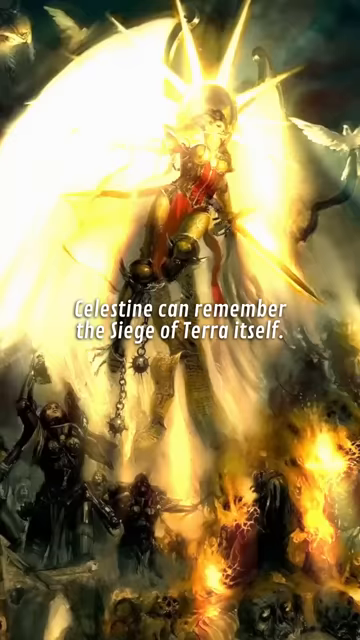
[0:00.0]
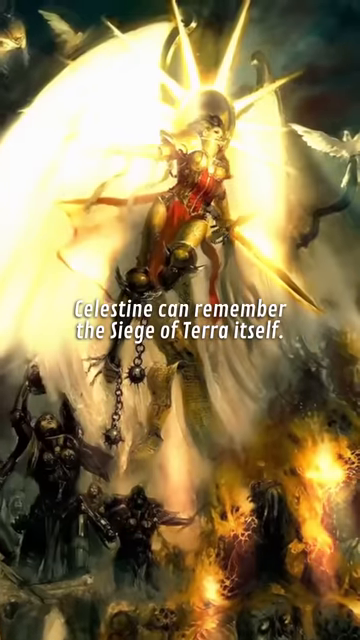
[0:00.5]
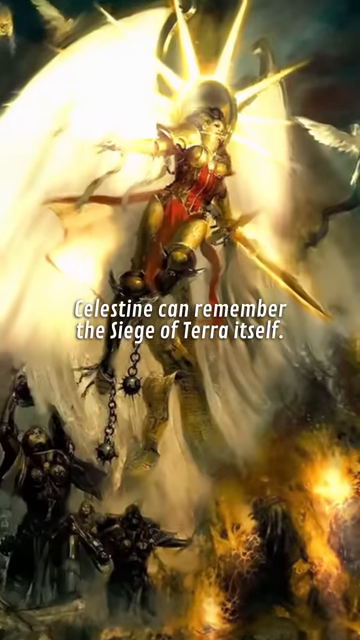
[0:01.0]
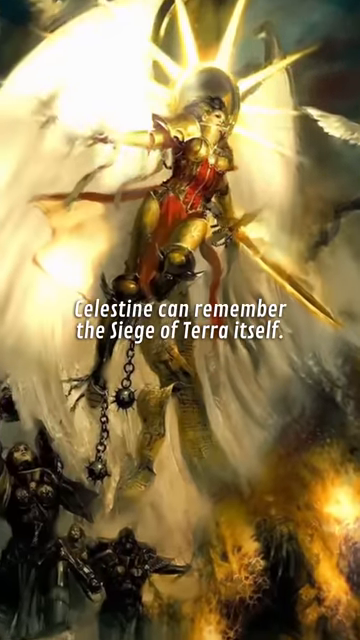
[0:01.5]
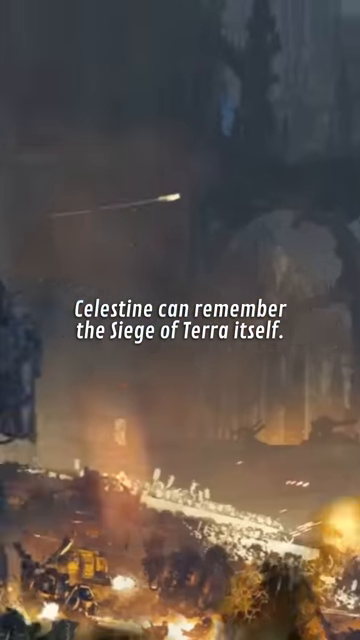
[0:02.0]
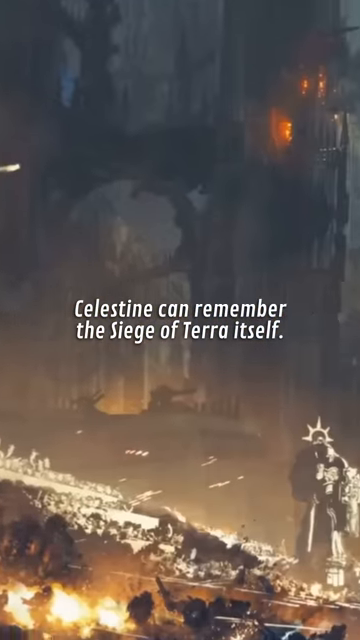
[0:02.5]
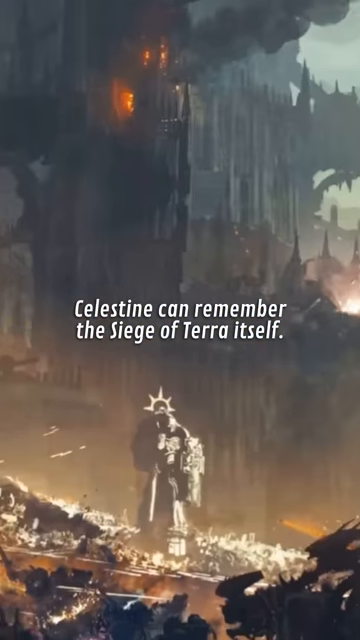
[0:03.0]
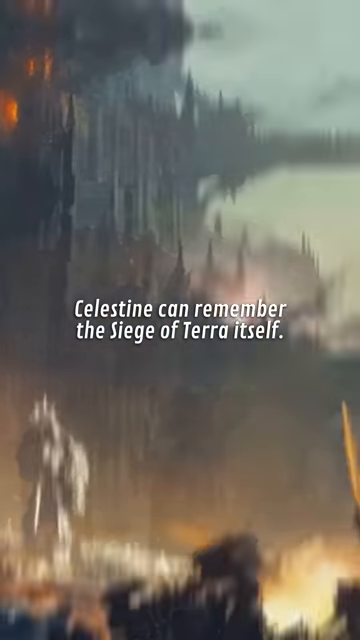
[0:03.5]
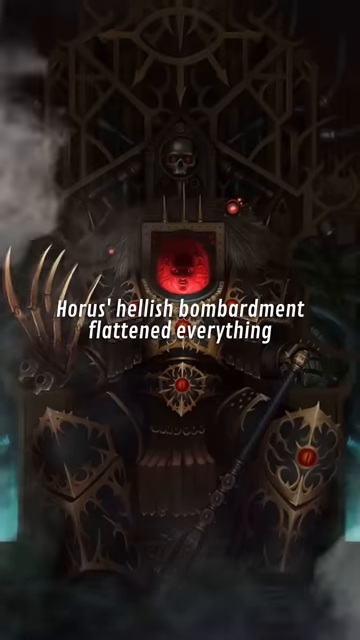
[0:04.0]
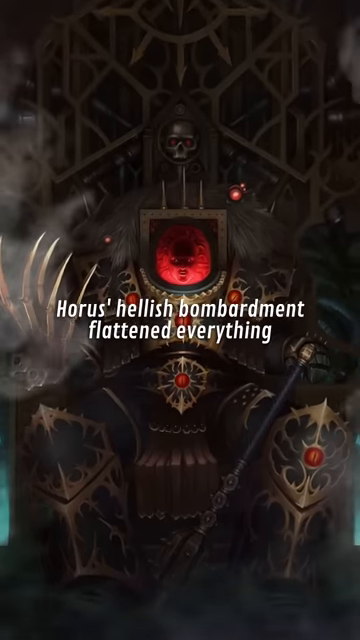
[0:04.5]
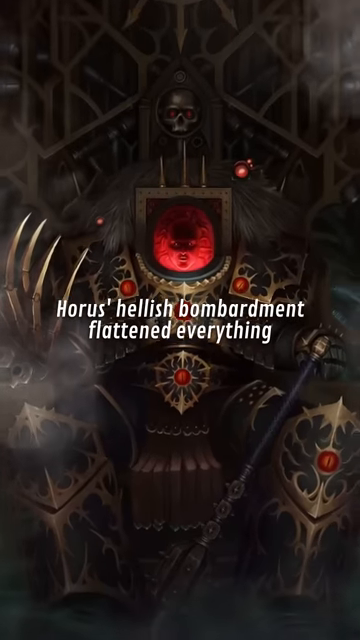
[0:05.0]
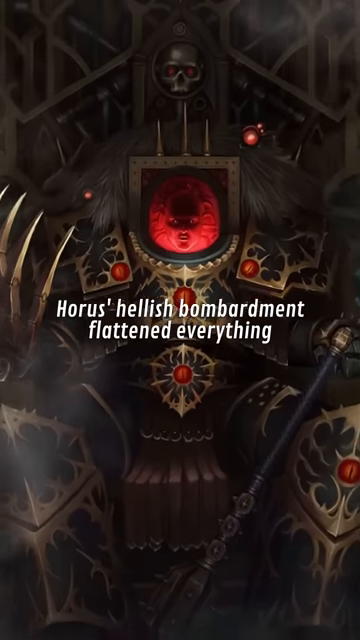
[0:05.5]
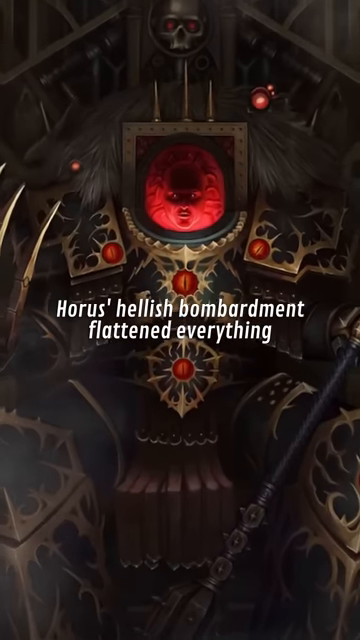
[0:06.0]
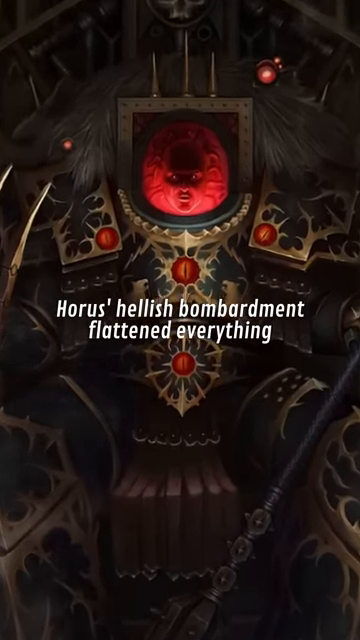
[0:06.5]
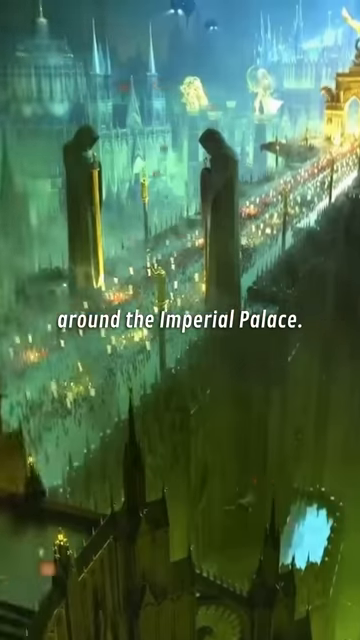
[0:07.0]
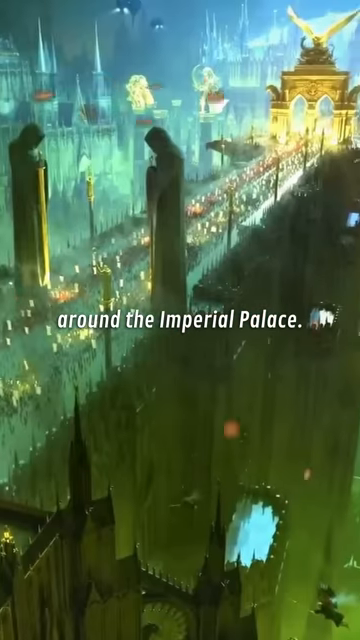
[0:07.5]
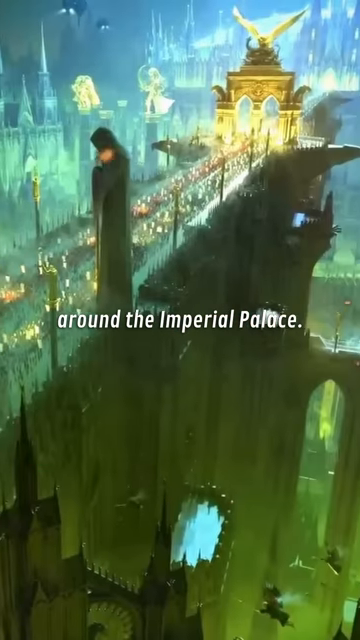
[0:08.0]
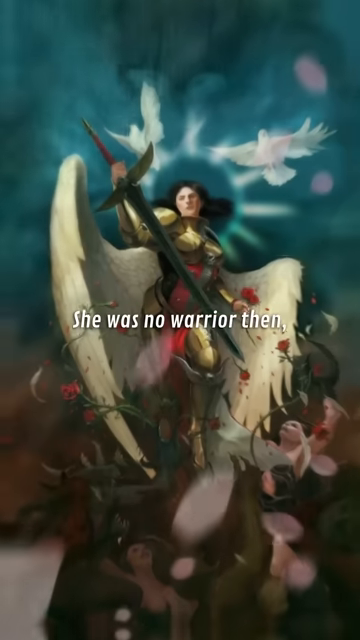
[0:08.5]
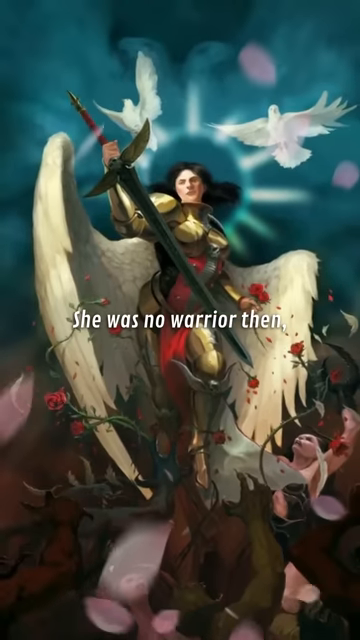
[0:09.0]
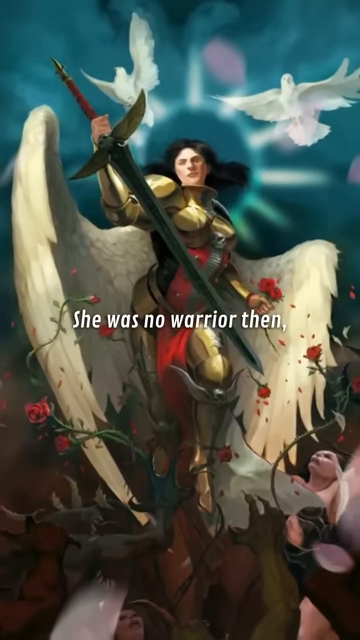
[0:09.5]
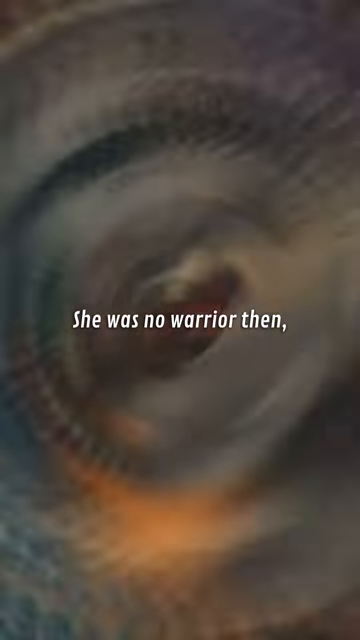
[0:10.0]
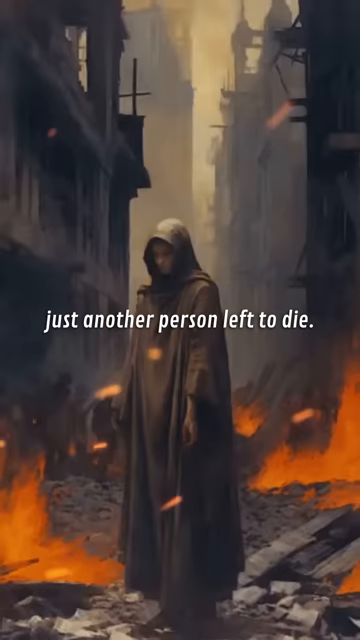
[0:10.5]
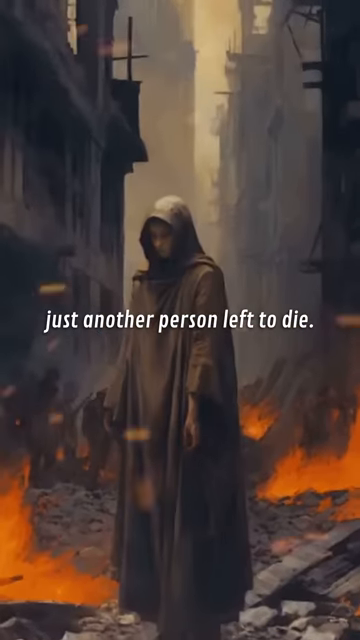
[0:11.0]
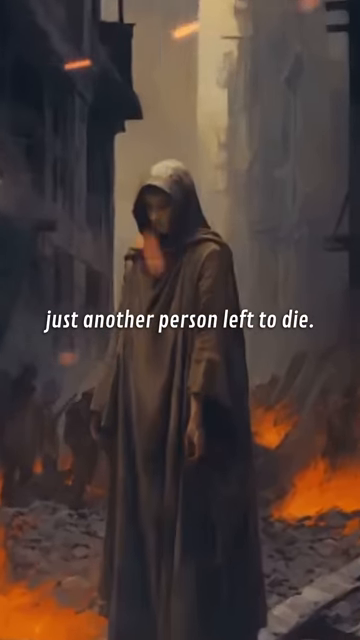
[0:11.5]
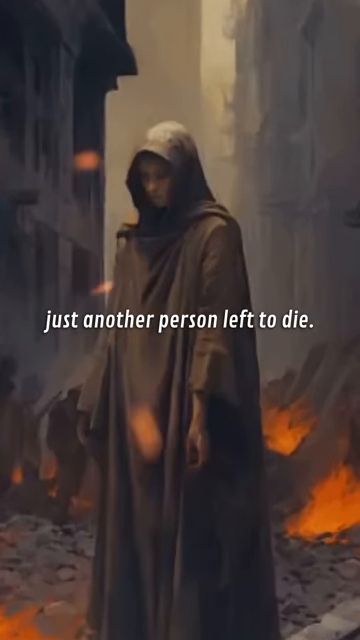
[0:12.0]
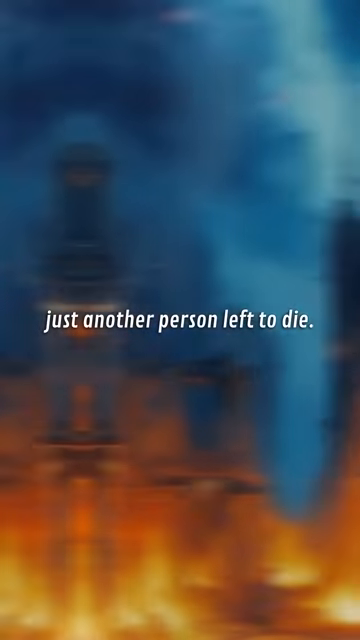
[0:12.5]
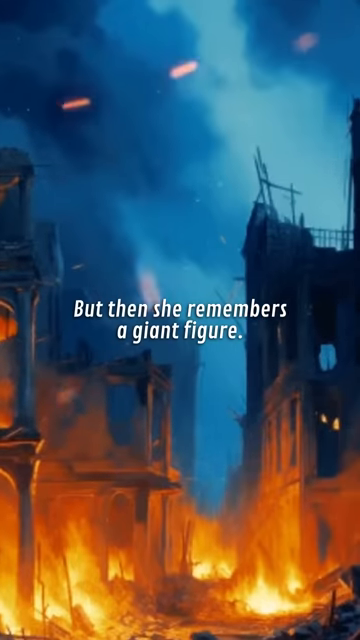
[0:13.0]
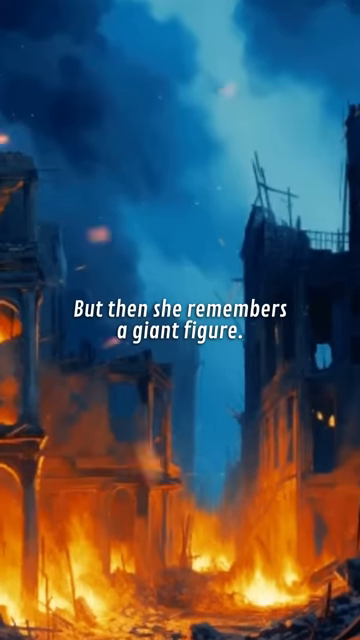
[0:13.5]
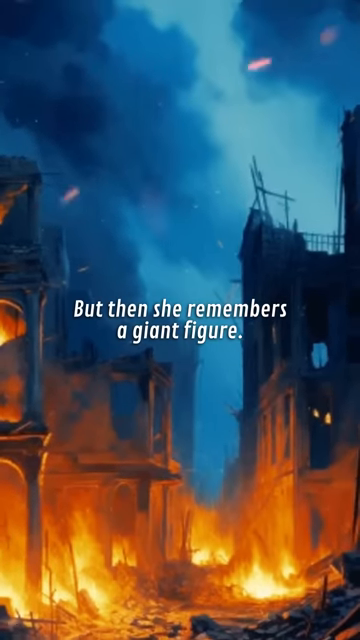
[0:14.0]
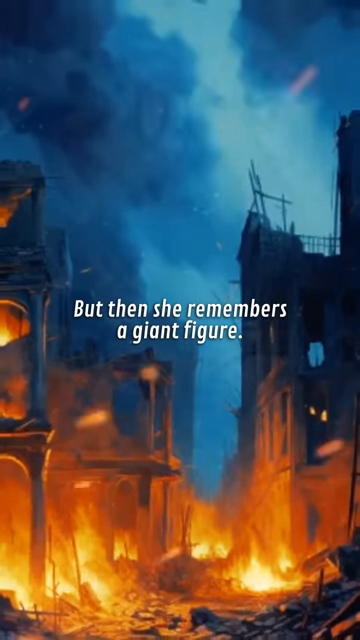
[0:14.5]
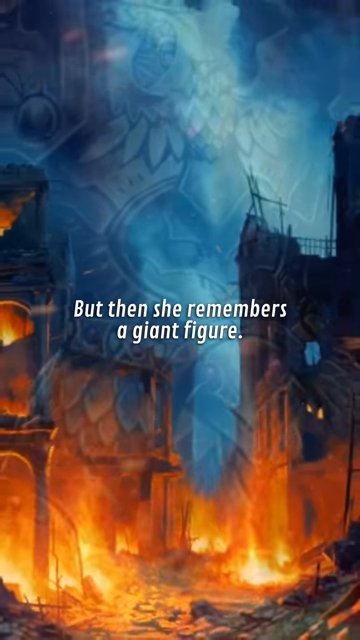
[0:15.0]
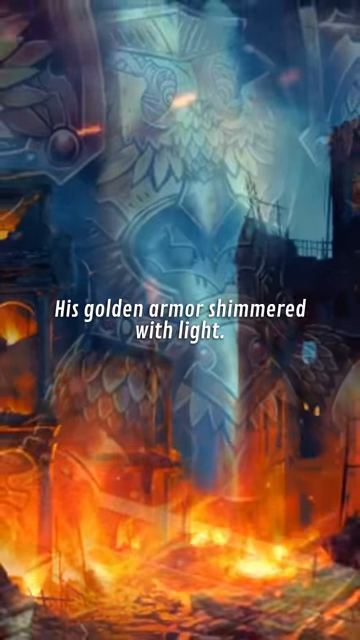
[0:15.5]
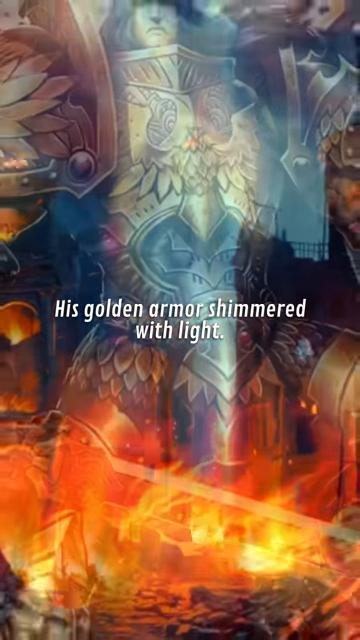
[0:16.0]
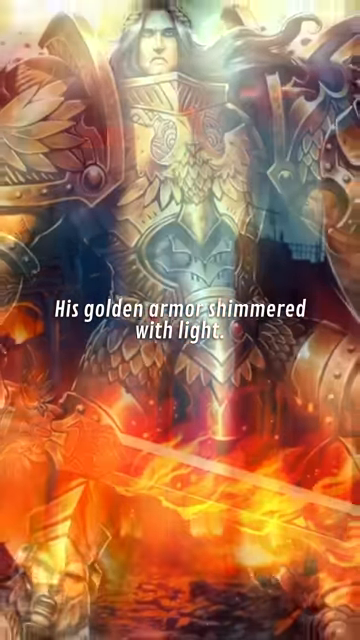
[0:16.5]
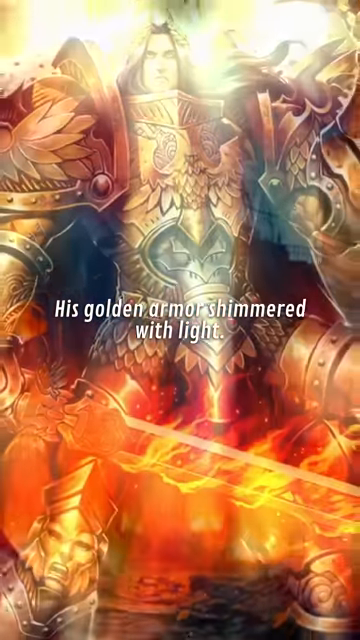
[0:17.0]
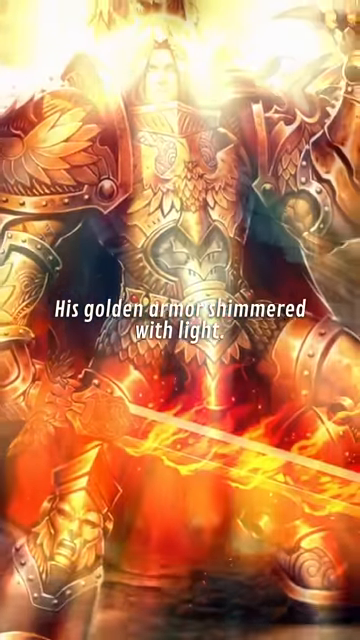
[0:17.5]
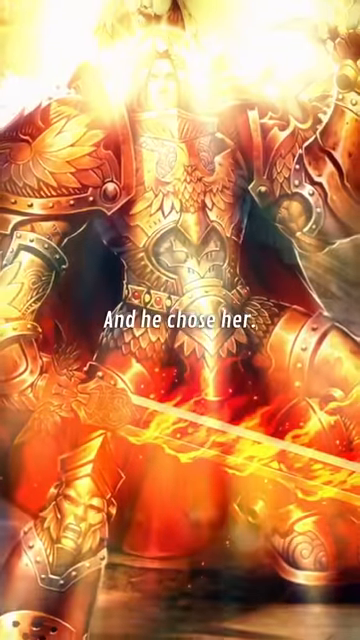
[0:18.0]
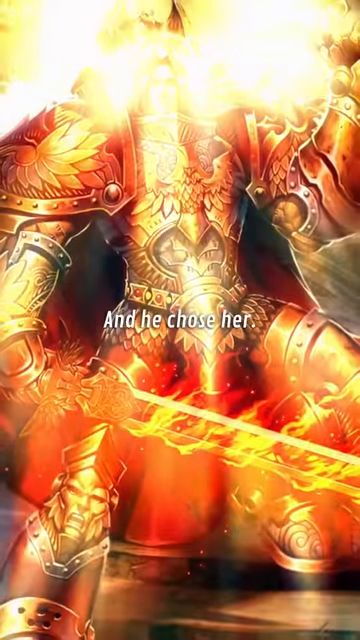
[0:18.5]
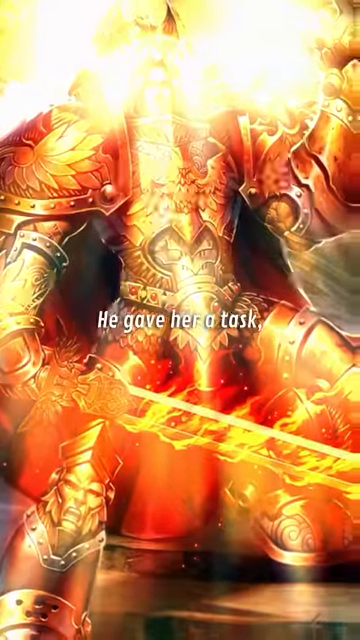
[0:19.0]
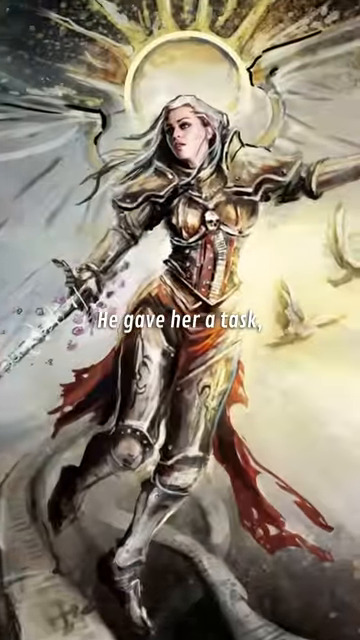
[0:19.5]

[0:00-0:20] What appears to be an angel-like fighter is presented, with white text reading "Celestine can remember the siege of Terra itself." A cutscene follows showing what appears to be a human being in a red, almost spacecraft-like outfit. The view then moves around the Emperor Place, showing what appears to be a character with white wings and two white doves, wielding a long, greenish sword with a red handle. There appear to be roses around them, while white text reads "just another person left to die." This individual appears to be in almost a monk outfit, wearing a brown robe with a brown hood, in the city, with buildings on the left and buildings on the right. The scene then transitions to what appears to be the destruction of a building, with embers and smoke coming from the left side of the frame.